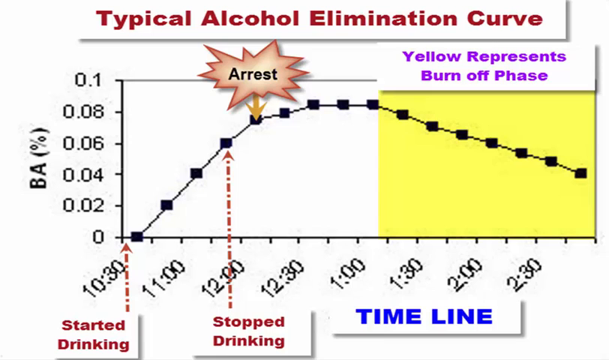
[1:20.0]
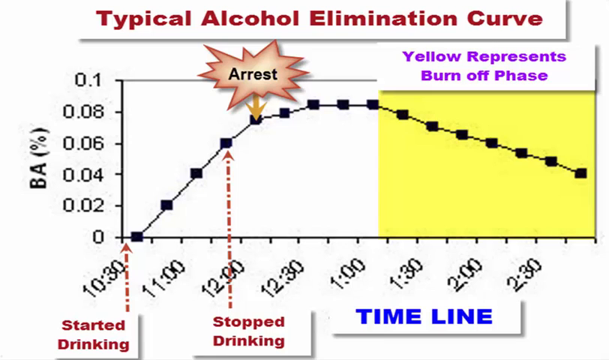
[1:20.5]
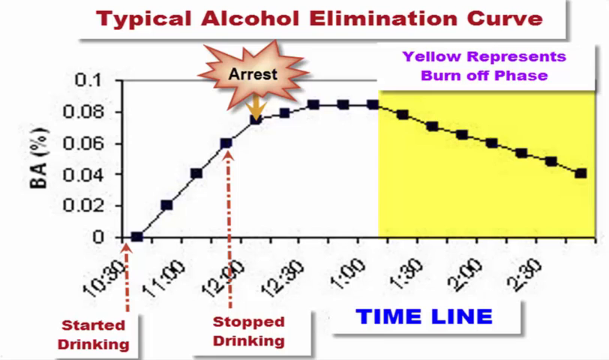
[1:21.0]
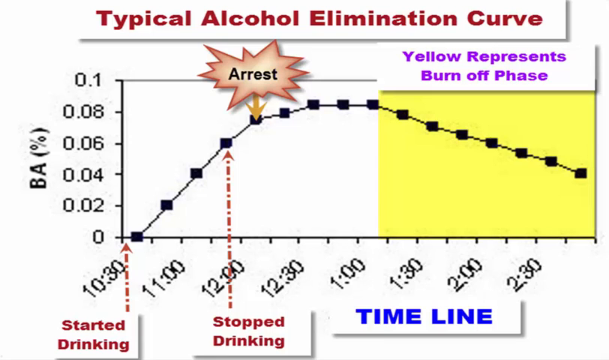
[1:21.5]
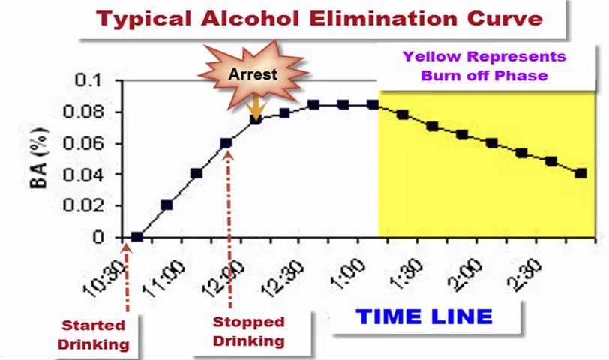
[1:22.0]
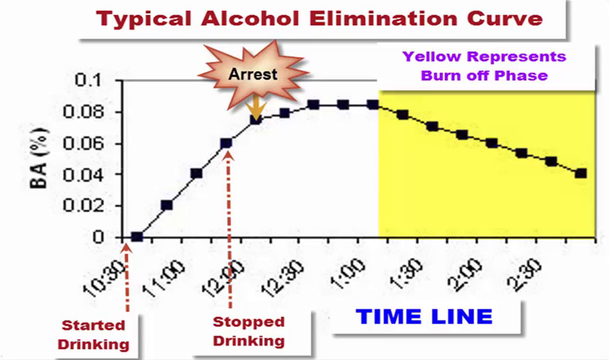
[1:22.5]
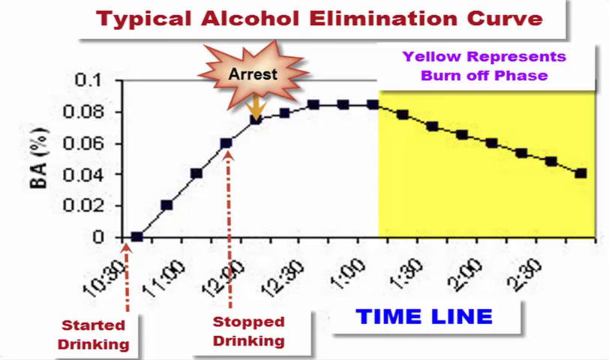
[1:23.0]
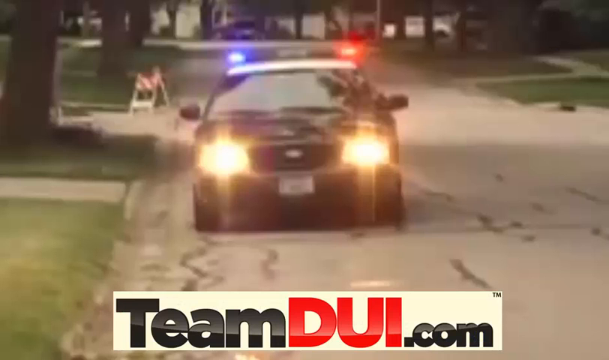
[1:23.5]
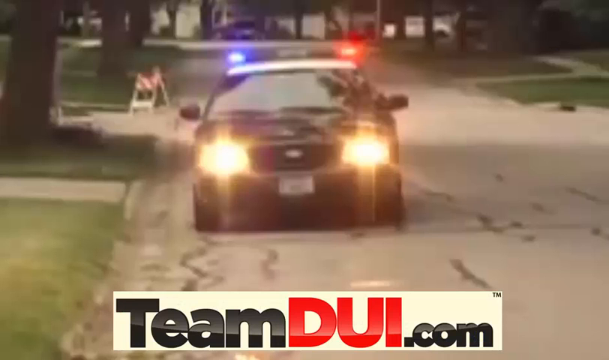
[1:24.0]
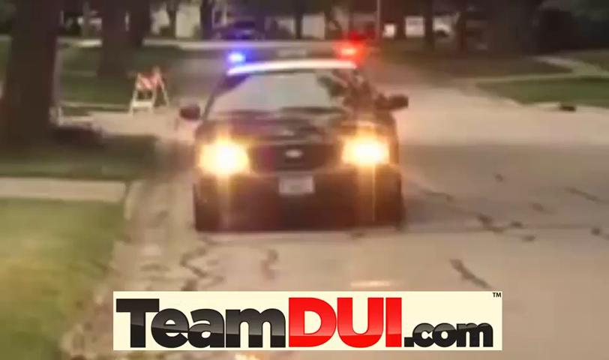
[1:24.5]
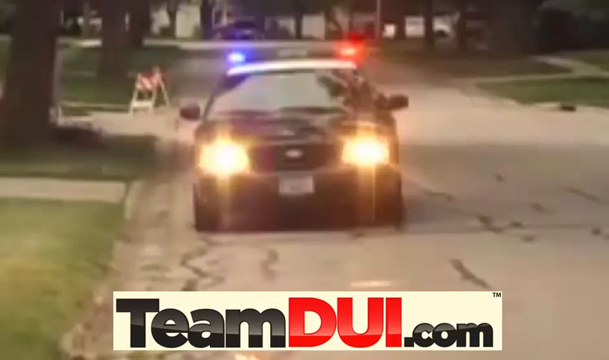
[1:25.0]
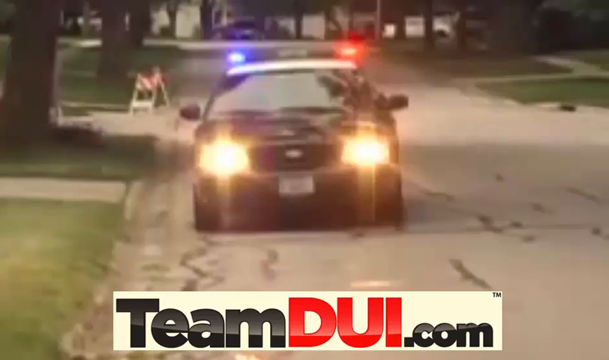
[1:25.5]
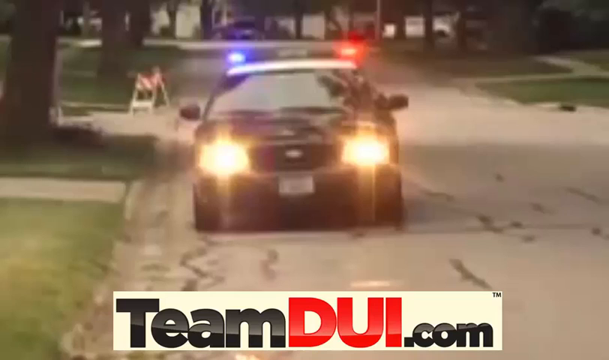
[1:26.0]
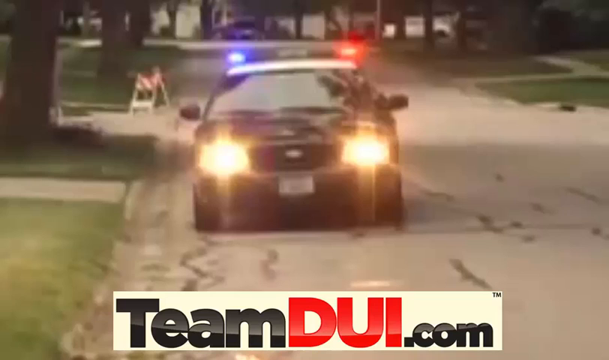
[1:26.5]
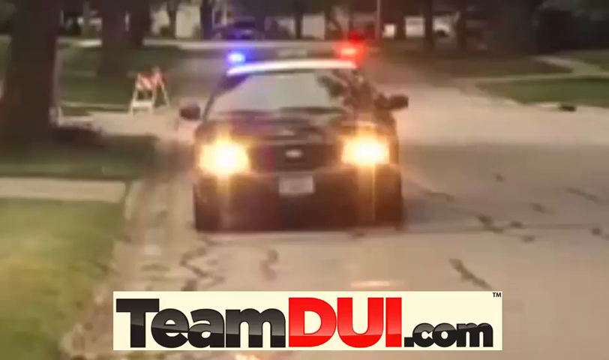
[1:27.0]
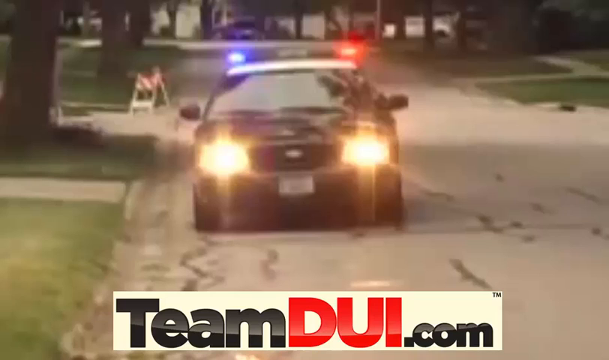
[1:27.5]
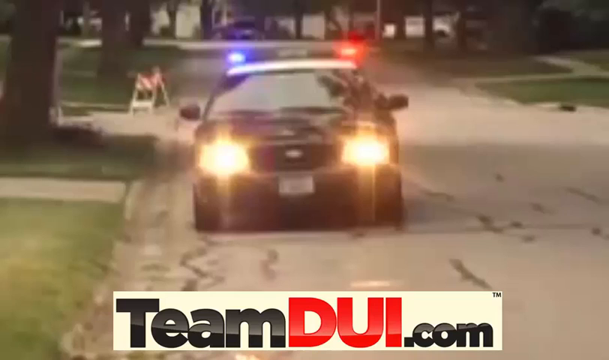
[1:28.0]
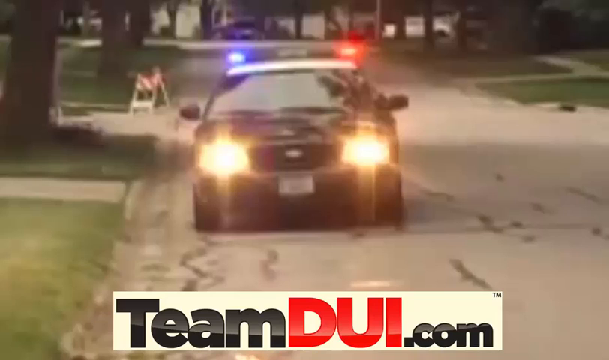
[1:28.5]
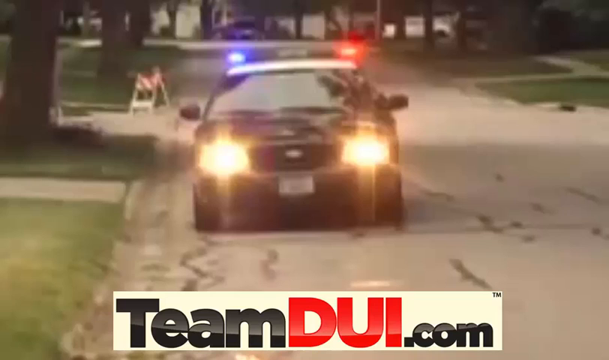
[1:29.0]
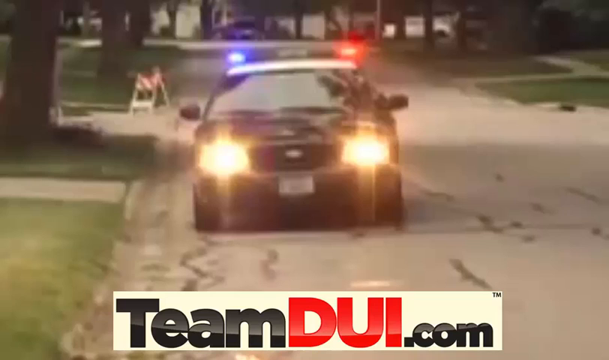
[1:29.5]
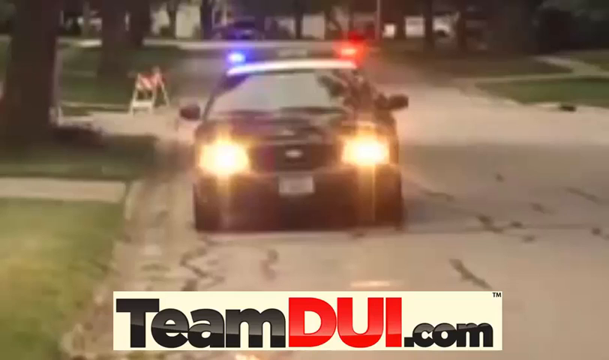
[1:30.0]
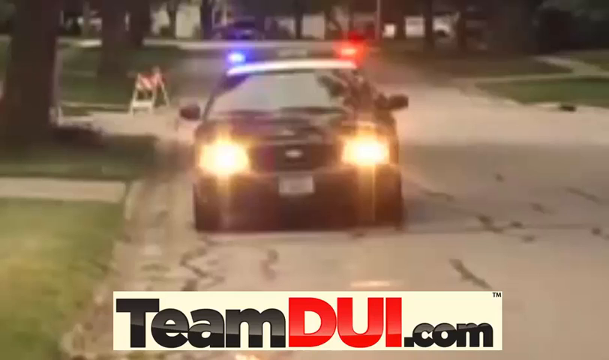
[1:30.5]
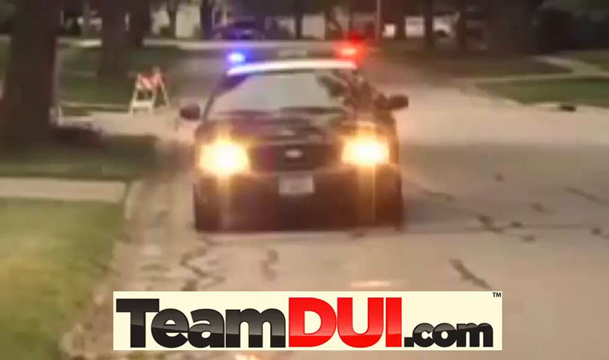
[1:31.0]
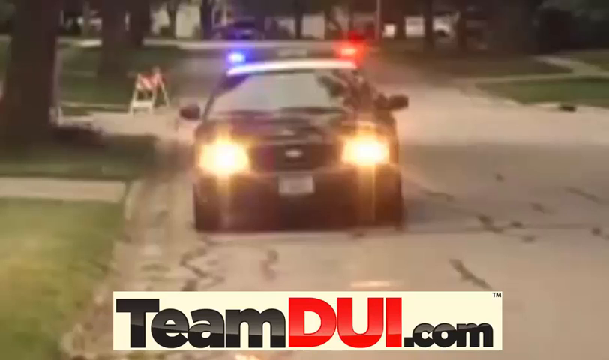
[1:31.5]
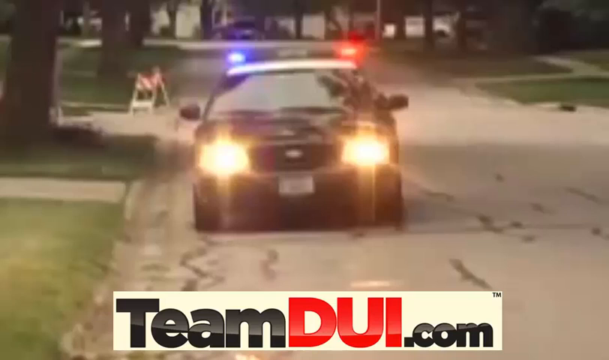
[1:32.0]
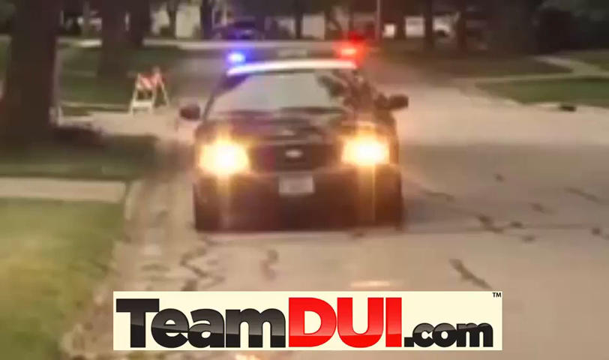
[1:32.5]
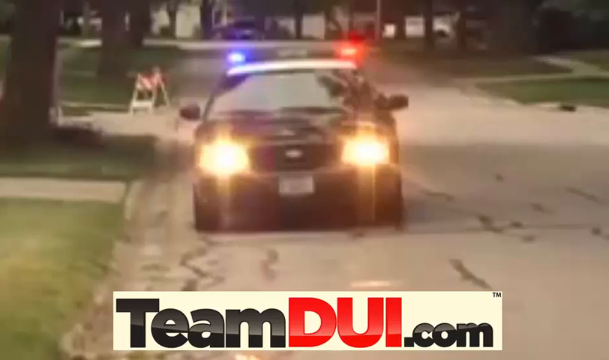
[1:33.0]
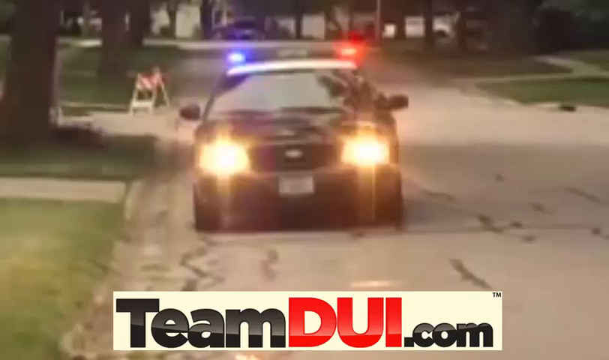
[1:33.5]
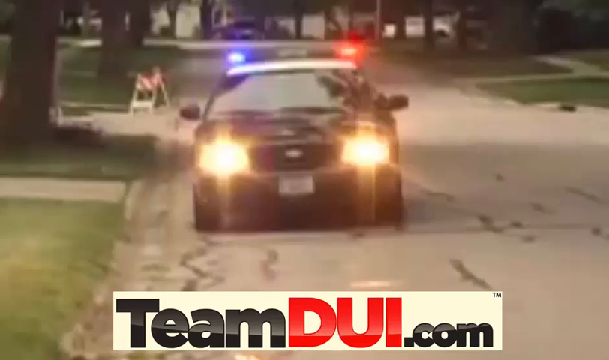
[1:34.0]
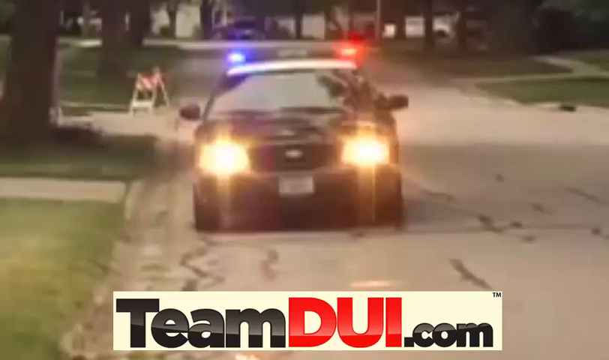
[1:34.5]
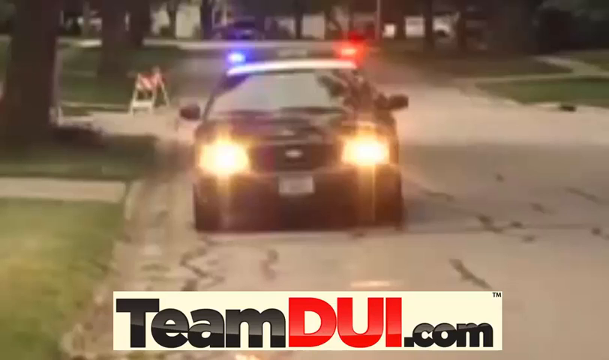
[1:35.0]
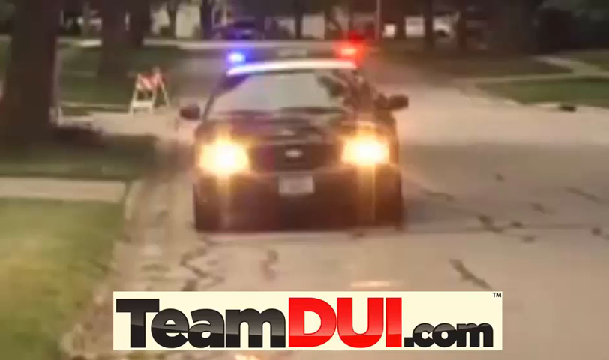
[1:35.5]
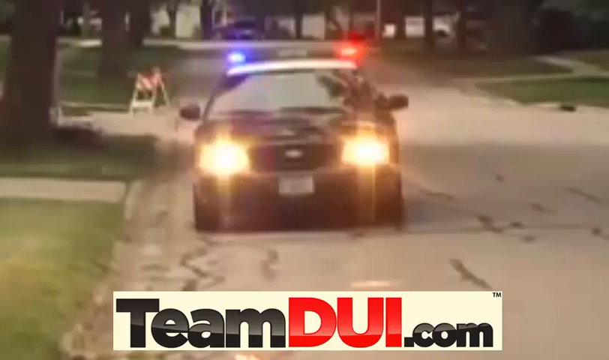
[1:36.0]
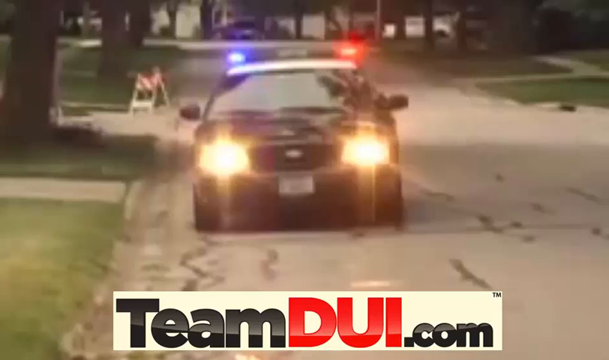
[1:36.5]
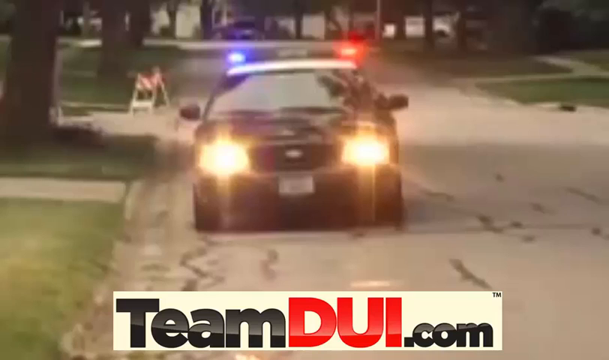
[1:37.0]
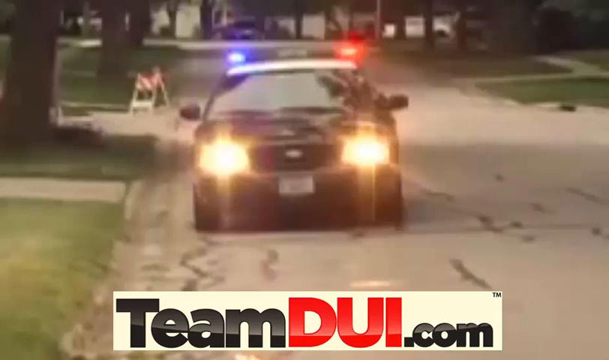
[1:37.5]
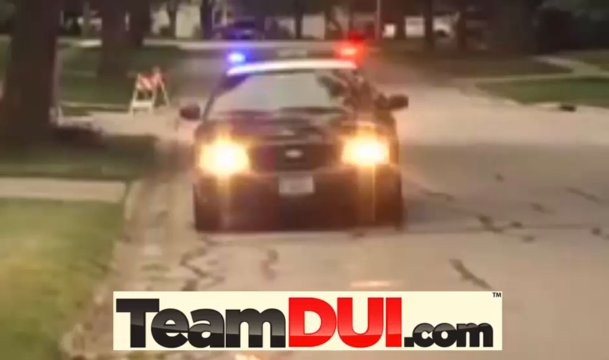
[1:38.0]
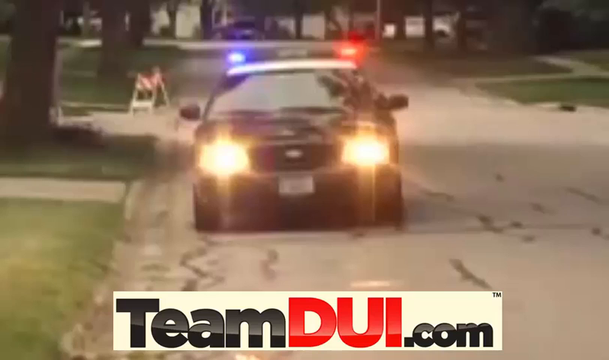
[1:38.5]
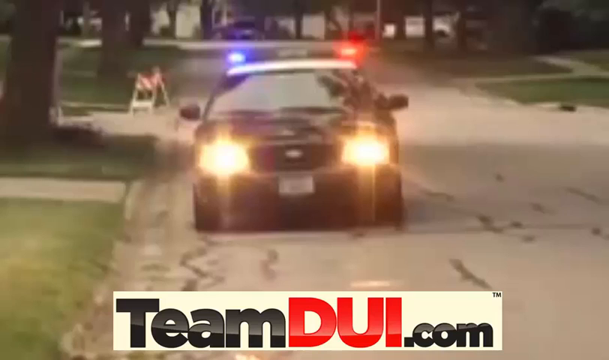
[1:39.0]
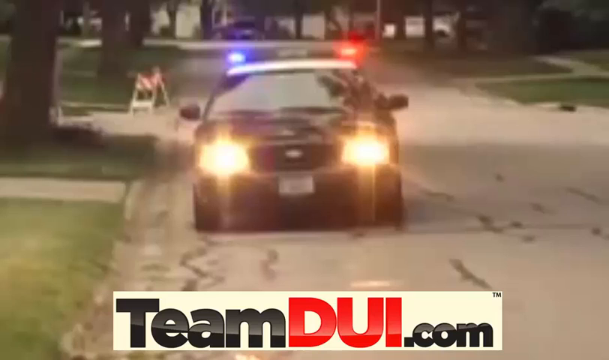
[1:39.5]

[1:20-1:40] The public service announcement shows the typical alcohol elimination curve, with "typical alcohol elimination curve" in a bar at the top like a banner. The arrest point is shown in a red explosion shape, kind of like in a comic book. The label "yellow burn off phase" is in a little purple bar above the yellow part of the curve. The blood alcohol levels at each time are little squares between the X and Y axes, and a red arrow goes up at the 0% alcohol point. At the bottom, "timeline" appears in blue capital letters. Underneath the axes, "started drinking" is written in red at the beginning, and "stopped drinking" in red at around, maybe, 11:45. Everything else, including the times and blood alcohol content values, is in black.